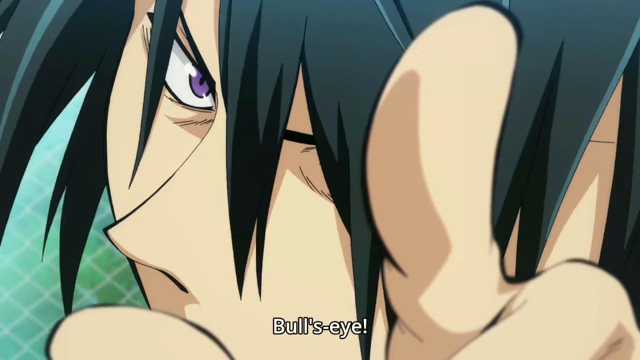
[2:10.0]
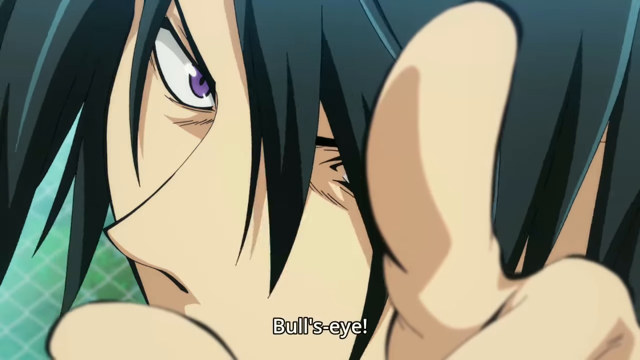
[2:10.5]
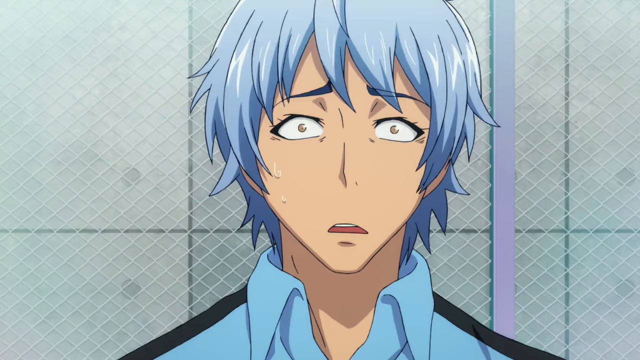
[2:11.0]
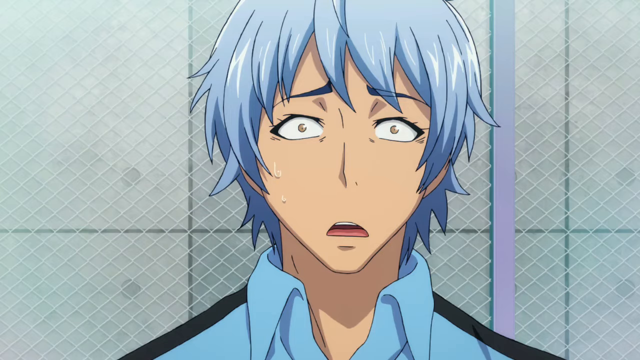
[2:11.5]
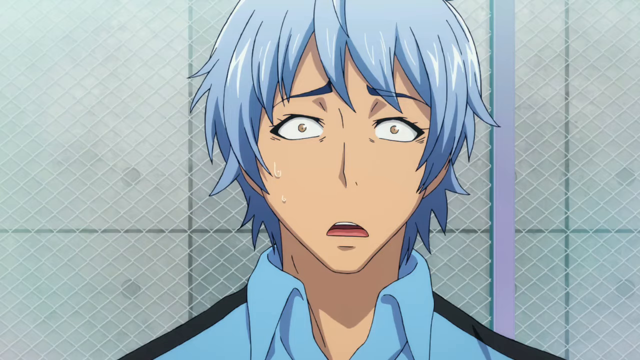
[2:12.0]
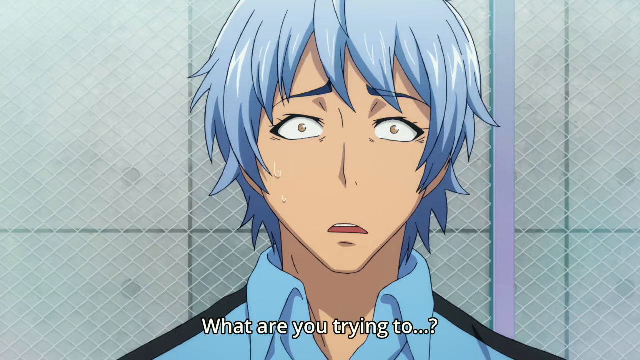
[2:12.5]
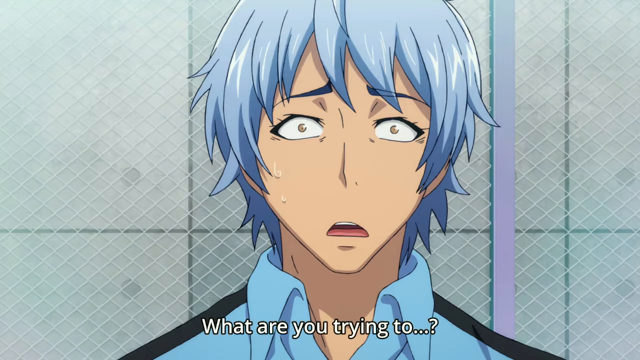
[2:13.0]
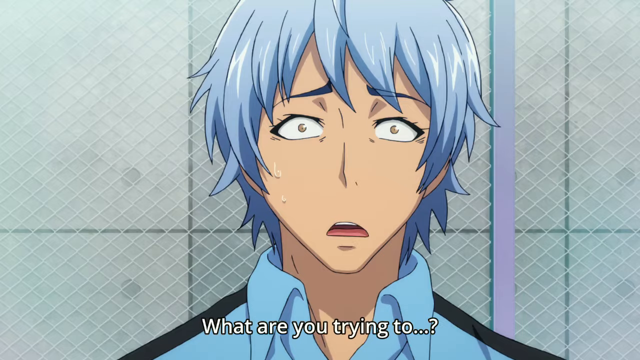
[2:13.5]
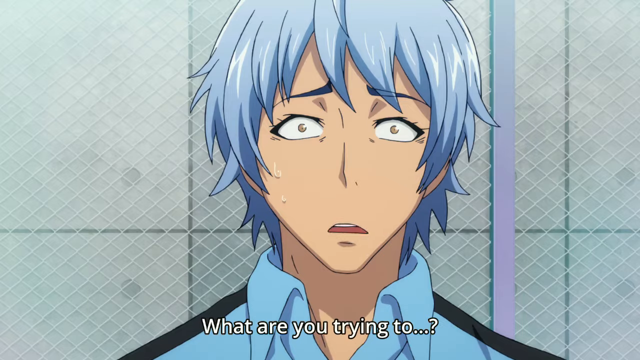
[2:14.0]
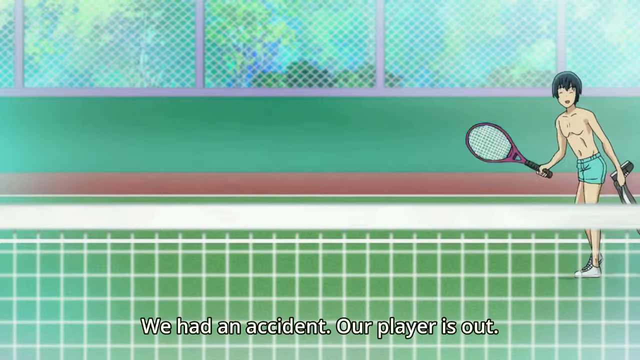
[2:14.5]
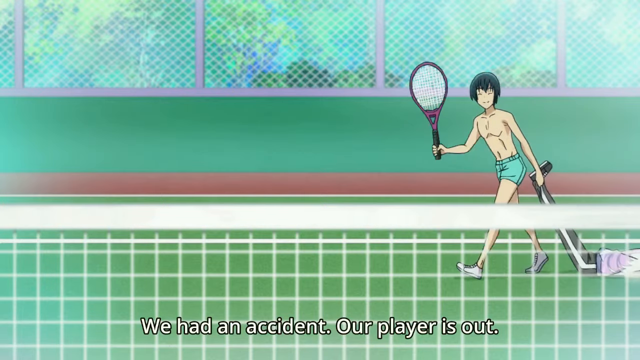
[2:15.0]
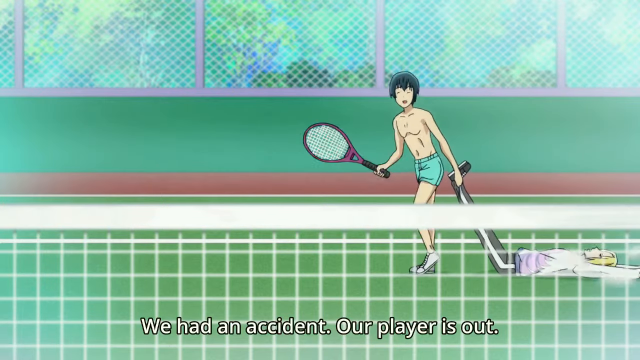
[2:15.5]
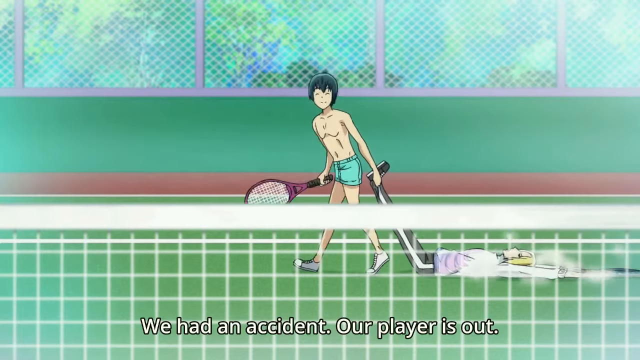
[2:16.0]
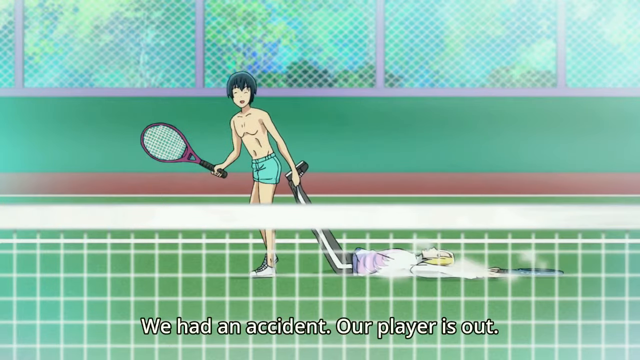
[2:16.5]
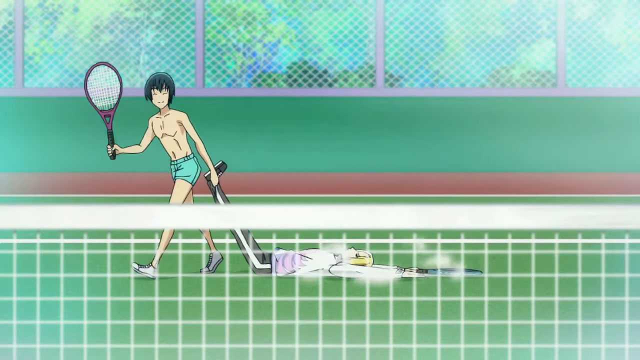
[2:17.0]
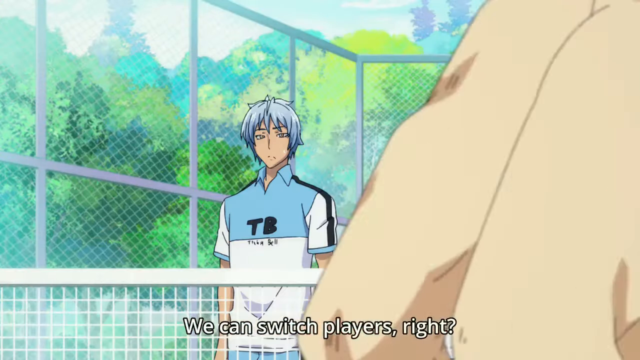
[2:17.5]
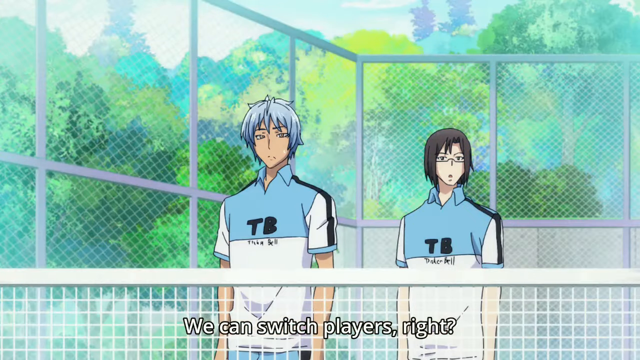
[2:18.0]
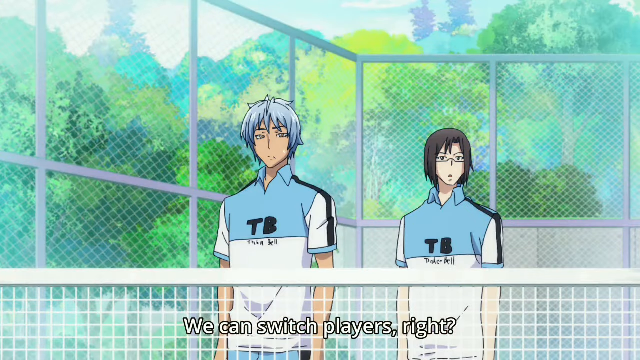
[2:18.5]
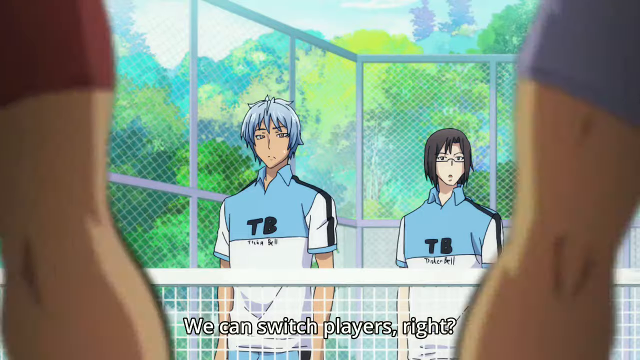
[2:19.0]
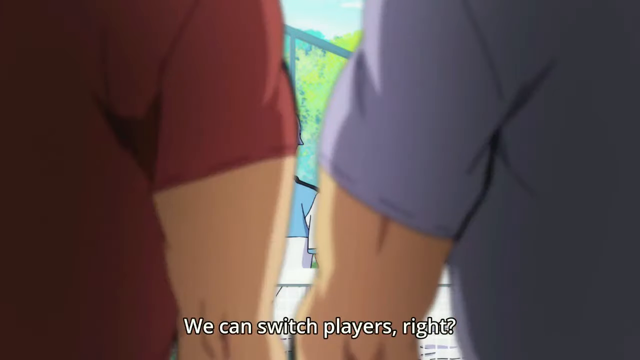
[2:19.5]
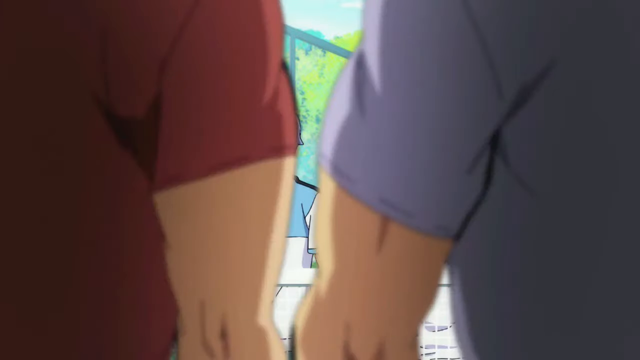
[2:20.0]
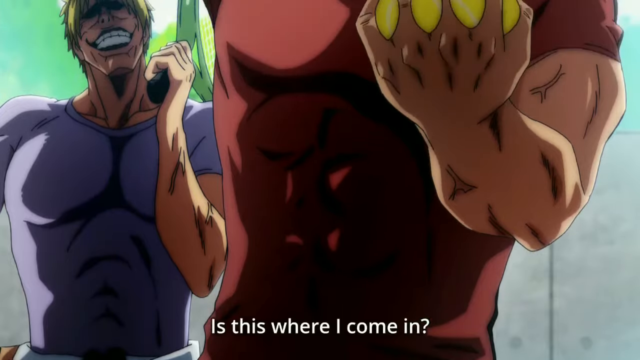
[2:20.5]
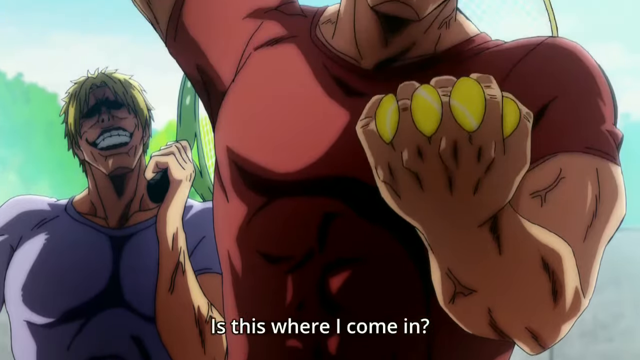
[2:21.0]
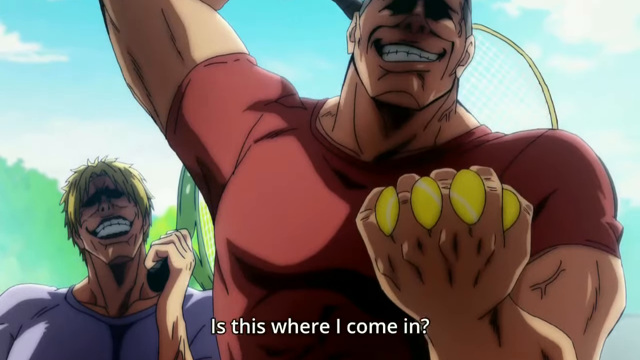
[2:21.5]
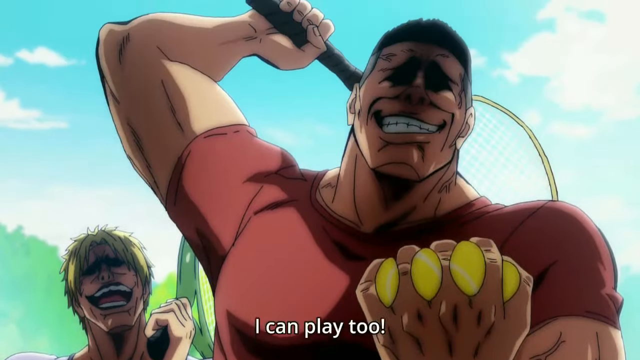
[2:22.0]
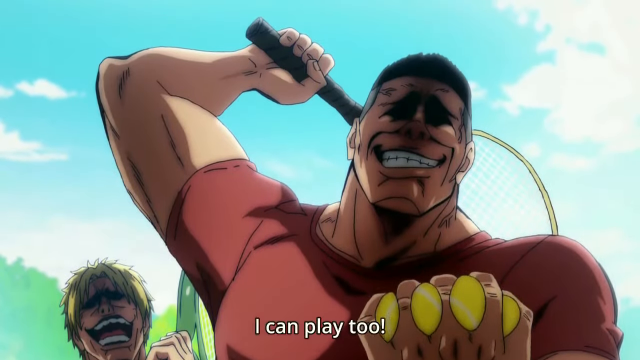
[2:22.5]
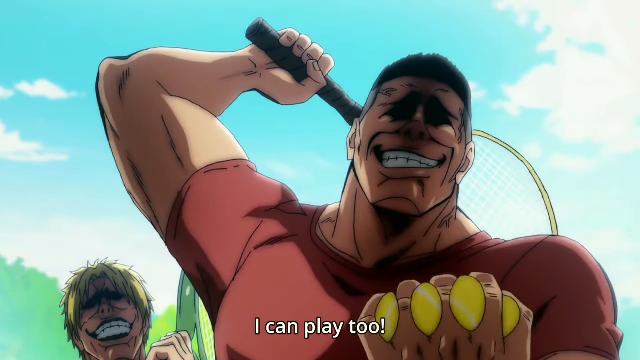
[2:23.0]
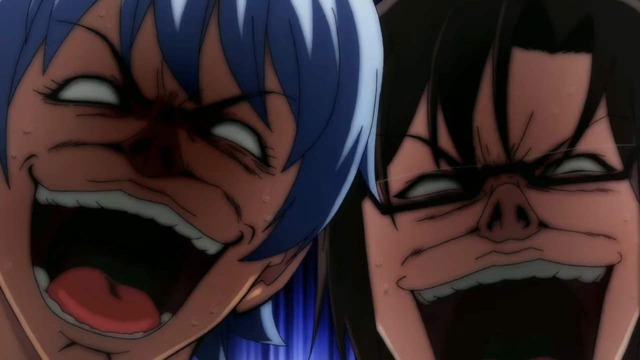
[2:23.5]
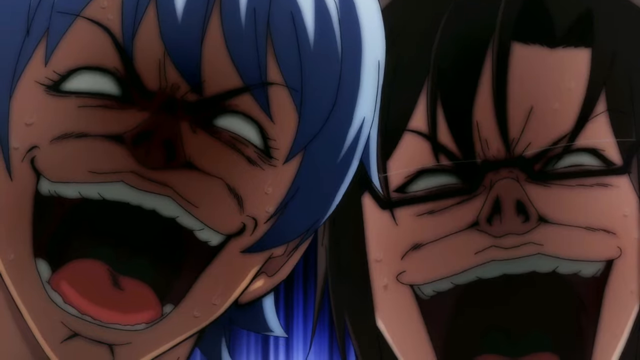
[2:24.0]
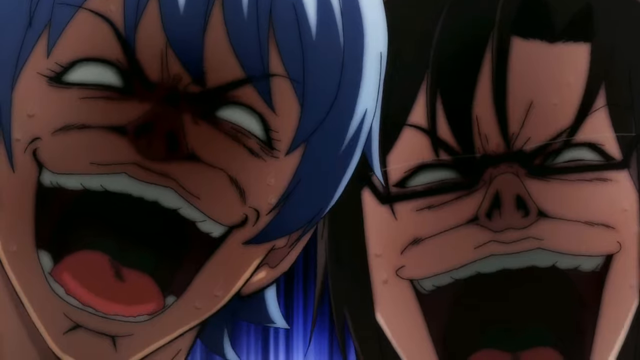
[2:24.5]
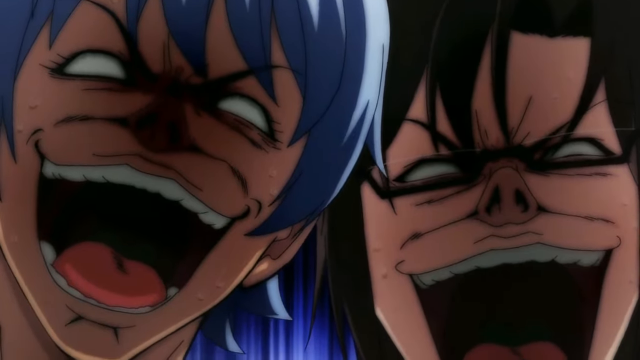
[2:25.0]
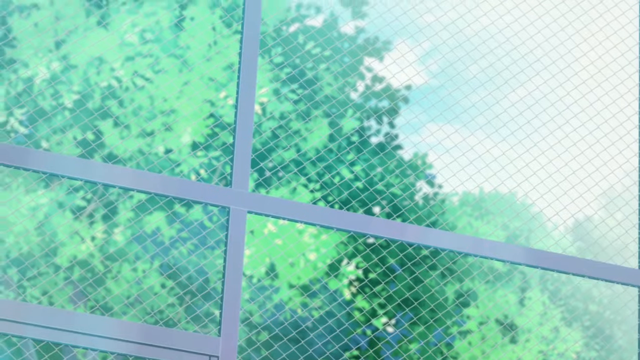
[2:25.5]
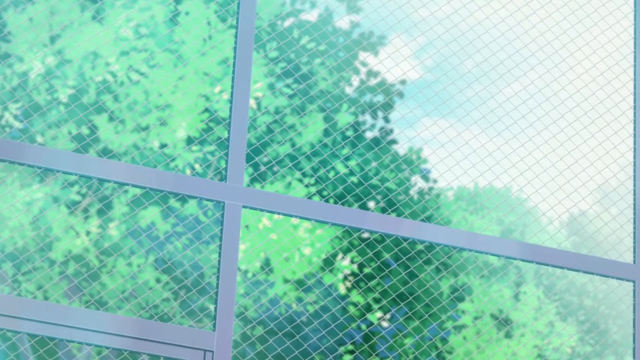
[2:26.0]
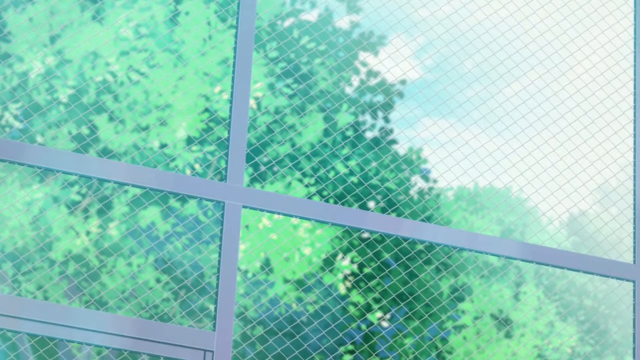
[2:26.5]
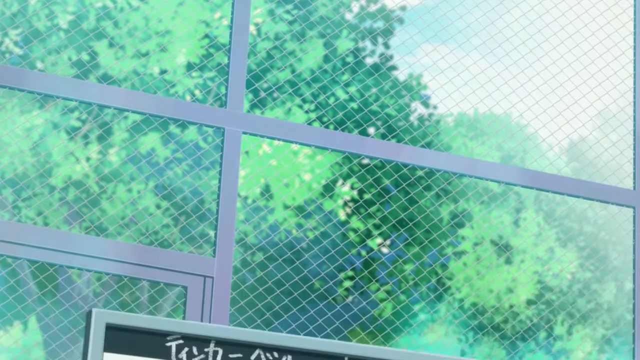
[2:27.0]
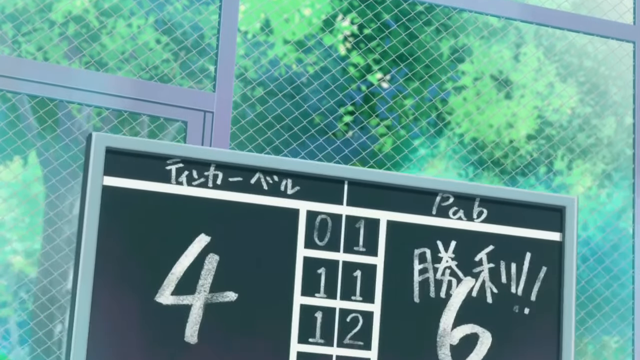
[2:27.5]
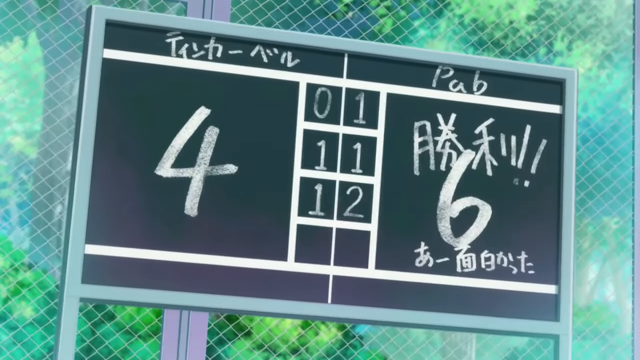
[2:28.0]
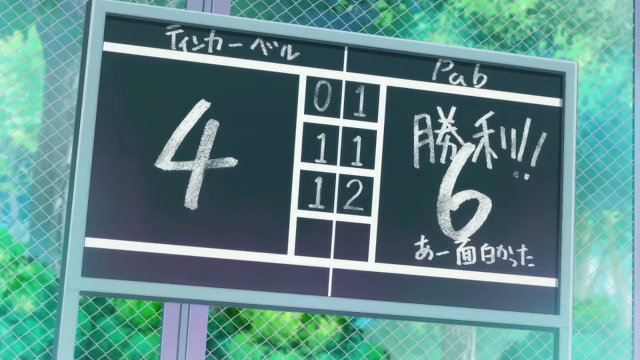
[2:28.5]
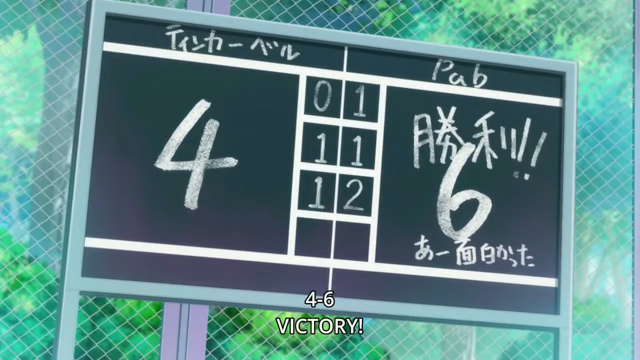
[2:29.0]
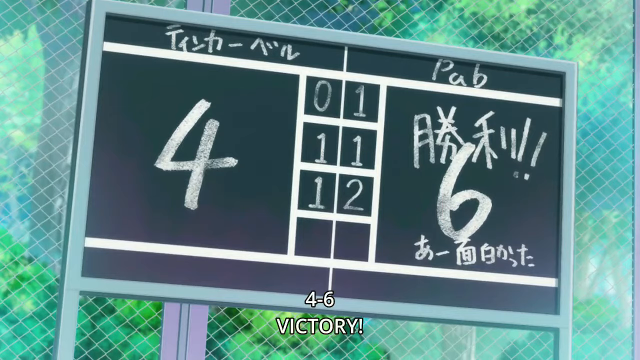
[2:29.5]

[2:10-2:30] The animated tennis game between two teams of two shows a close-up of a man with black hair and blue eyes, with the word "bullseye" written on the bottom of the screen. Another animated person, wearing a blue and white tennis top and with short blue hair, looks very shocked and surprised. The words "what are you trying" come up on the bottom of the screen, followed by "we had an accident our player is out." A tennis player wearing no shirt, just a pair of blue shorts, drags his teammate along the ground, holding him by his feet and pulling him off the court while saying "we can switch players right." The other two players both look very shocked and upset by this. Two new players come onto the court with the words "I can play too"; they are very large, muscly men holding tennis balls in their hands, laughing demonically at the other team. A close-up shows a scoreboard with the number four on one side and the number six on the other, and the words "4-6 victory" come up on the bottom of the screen.